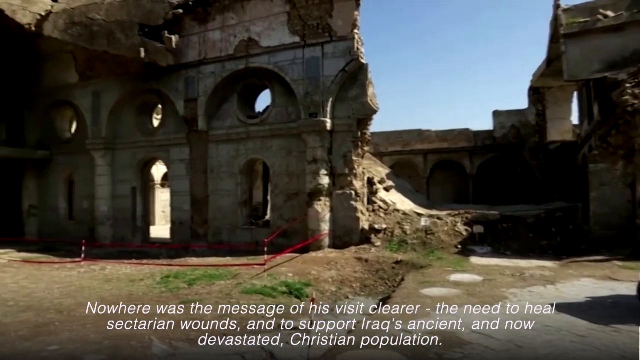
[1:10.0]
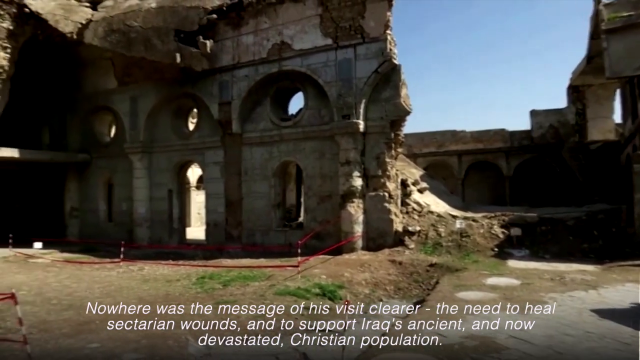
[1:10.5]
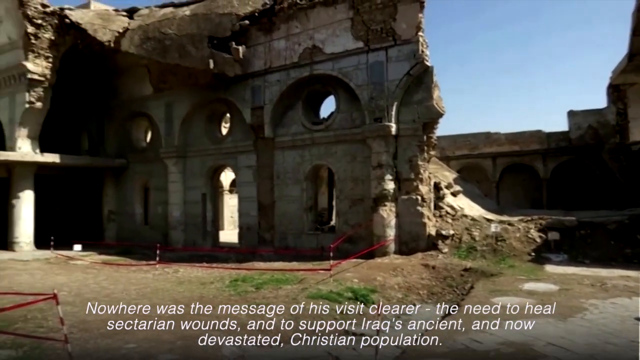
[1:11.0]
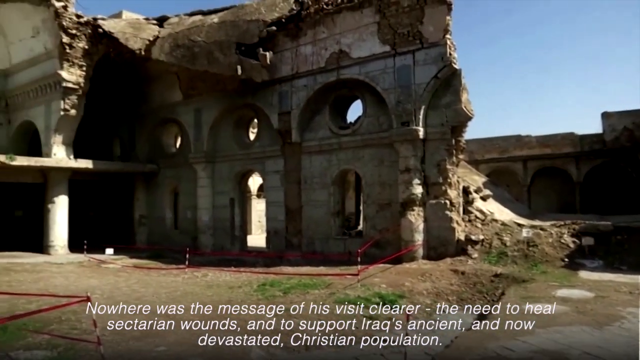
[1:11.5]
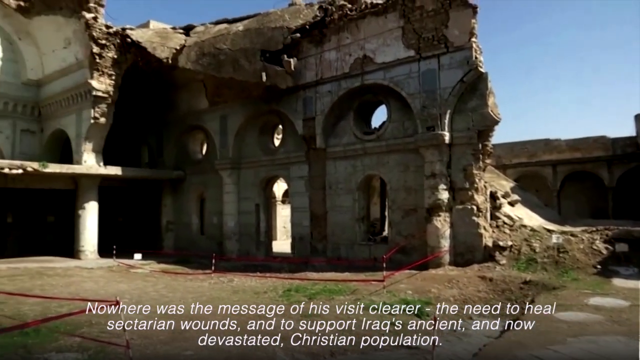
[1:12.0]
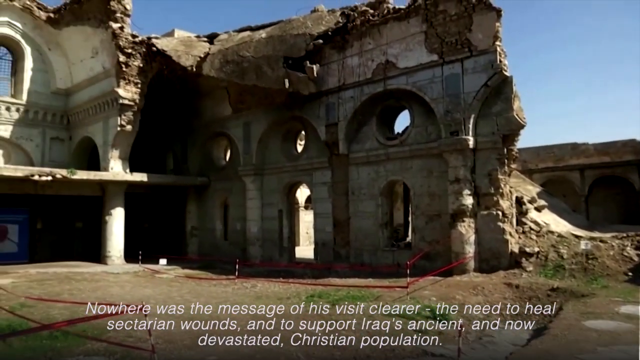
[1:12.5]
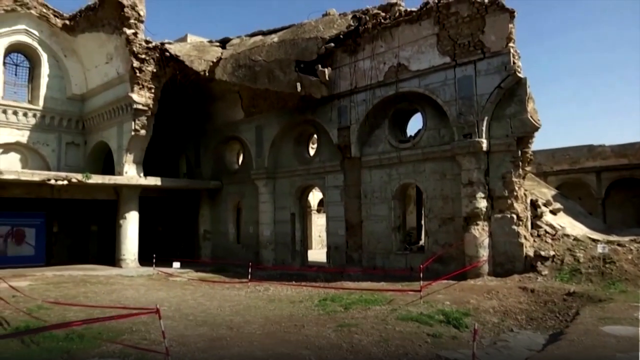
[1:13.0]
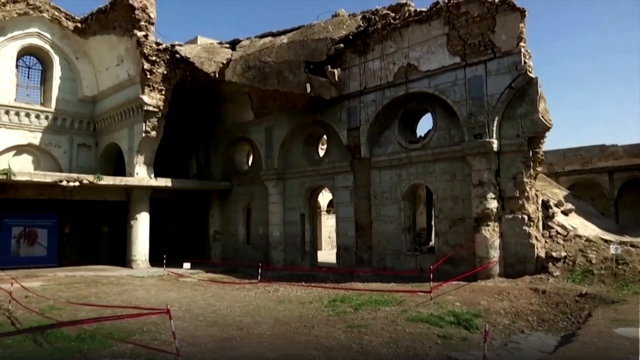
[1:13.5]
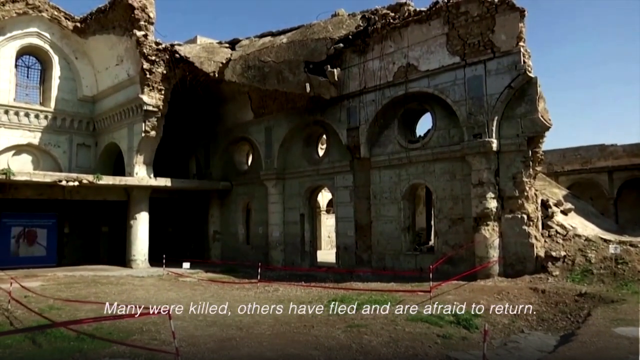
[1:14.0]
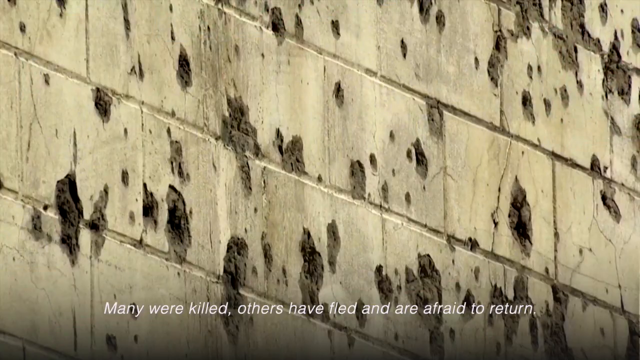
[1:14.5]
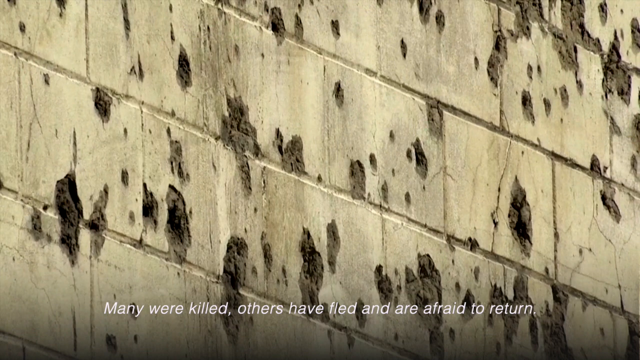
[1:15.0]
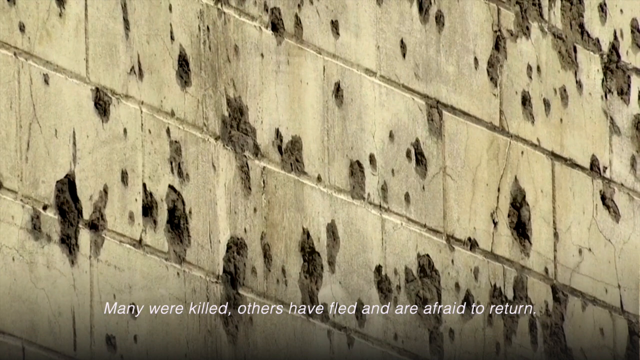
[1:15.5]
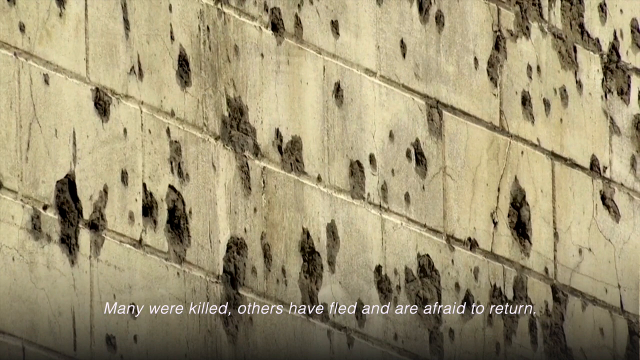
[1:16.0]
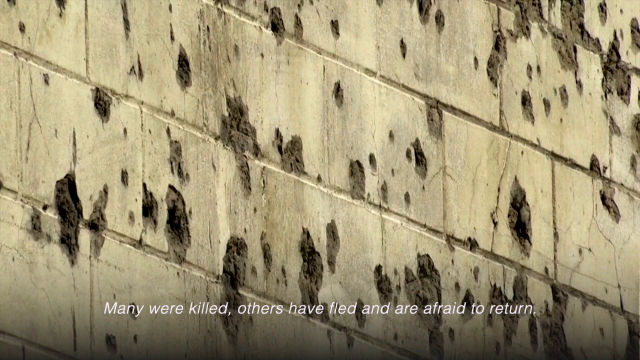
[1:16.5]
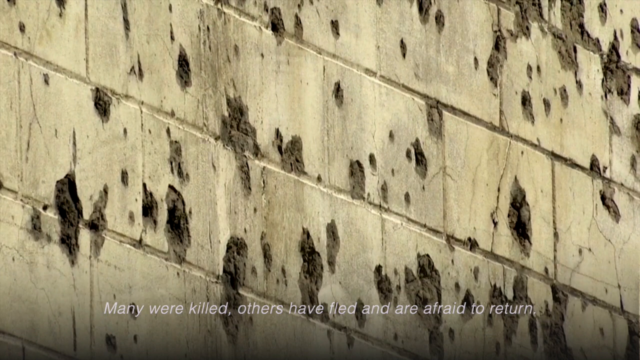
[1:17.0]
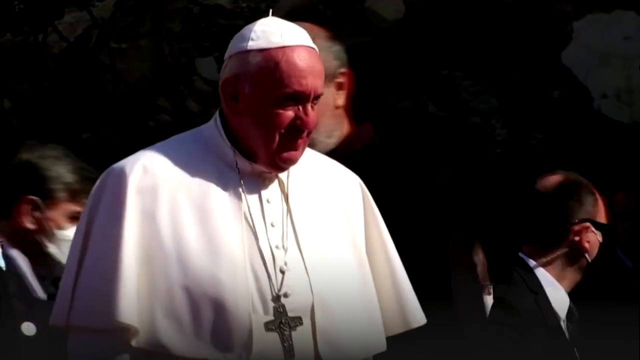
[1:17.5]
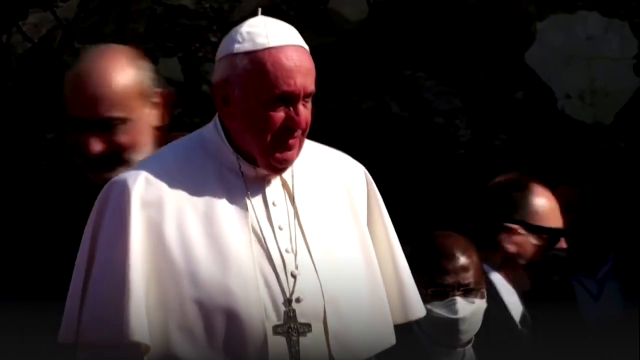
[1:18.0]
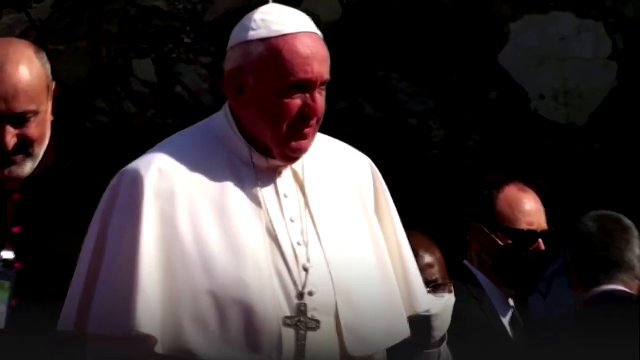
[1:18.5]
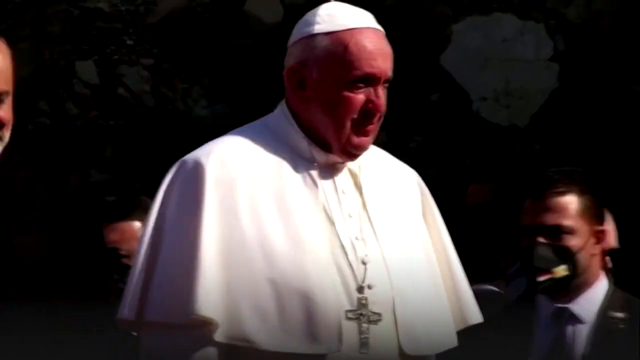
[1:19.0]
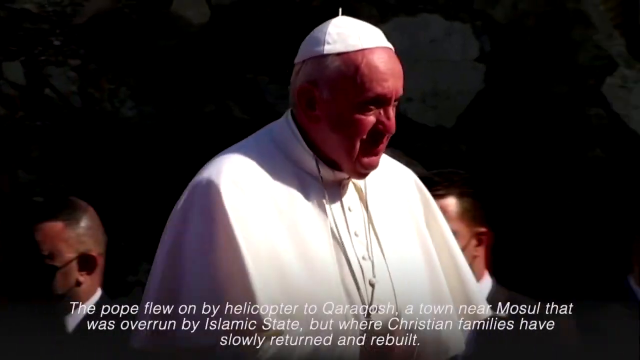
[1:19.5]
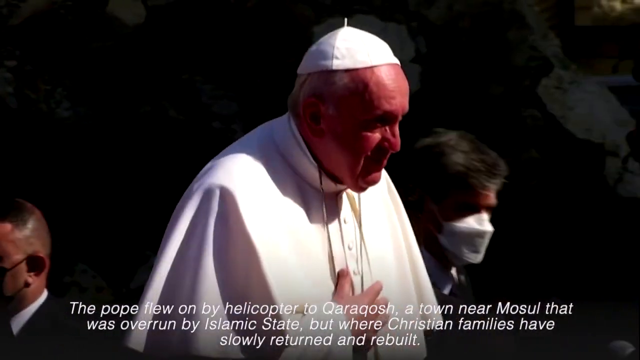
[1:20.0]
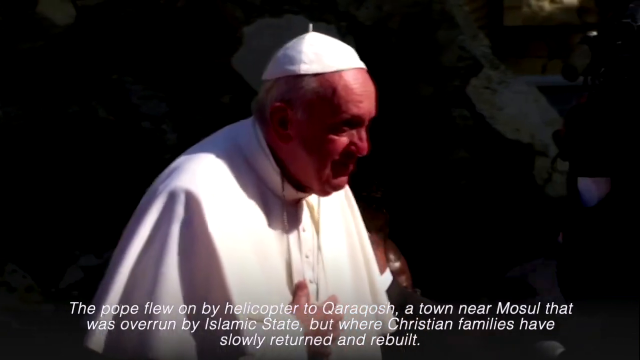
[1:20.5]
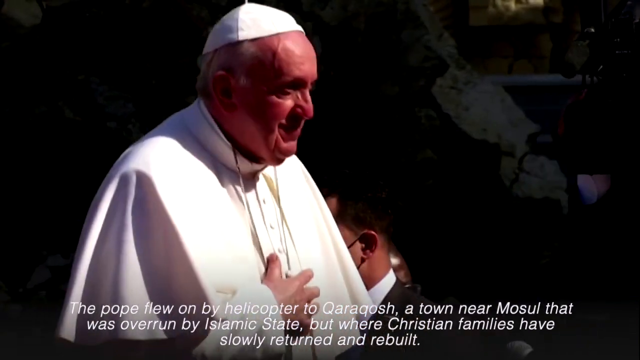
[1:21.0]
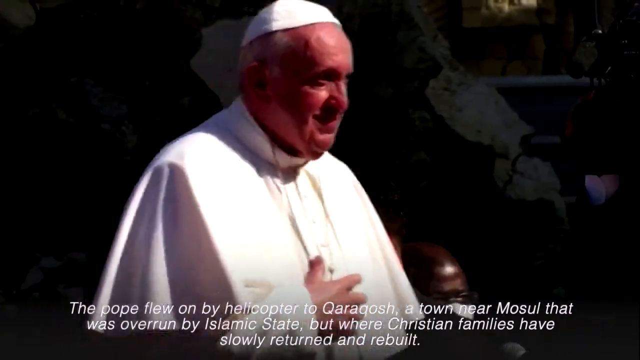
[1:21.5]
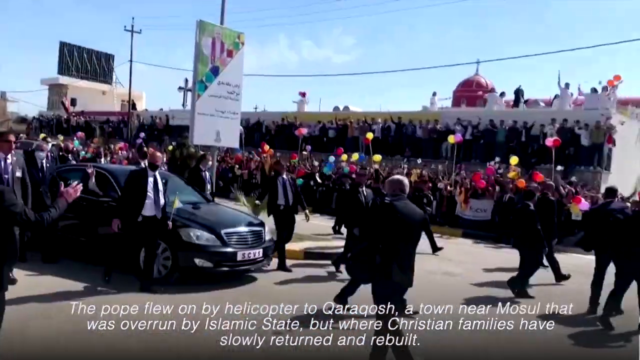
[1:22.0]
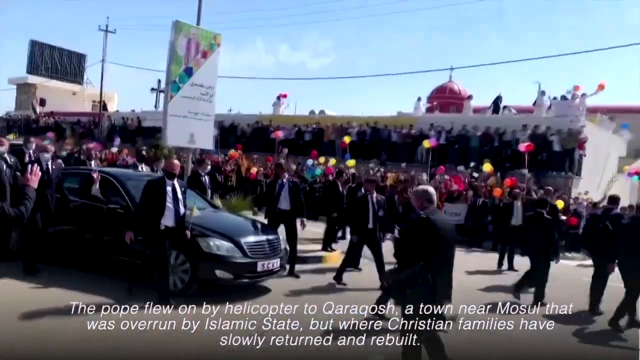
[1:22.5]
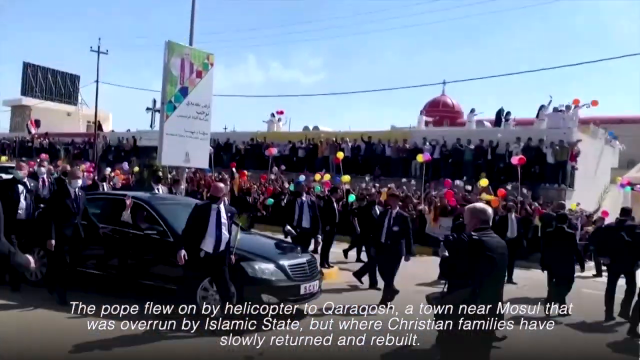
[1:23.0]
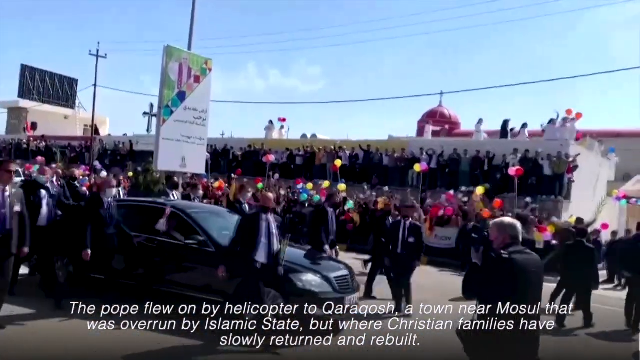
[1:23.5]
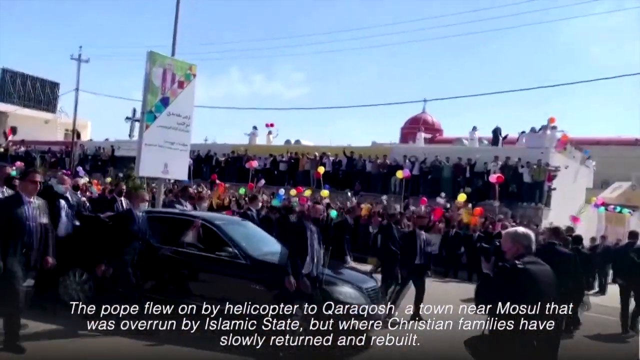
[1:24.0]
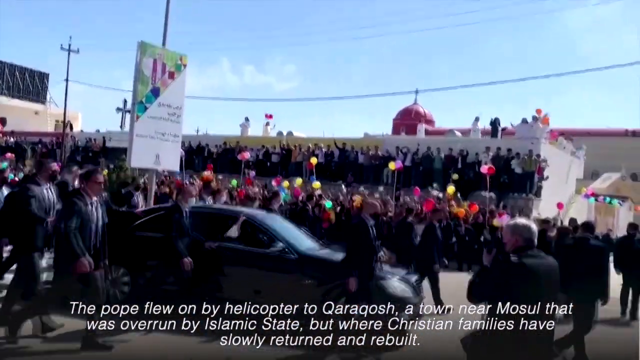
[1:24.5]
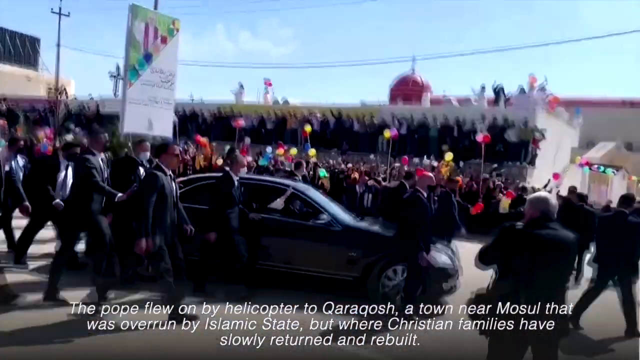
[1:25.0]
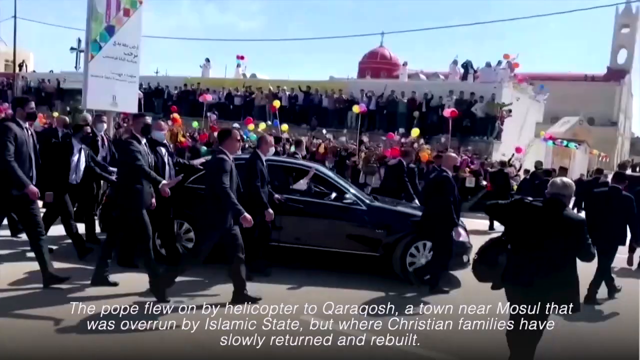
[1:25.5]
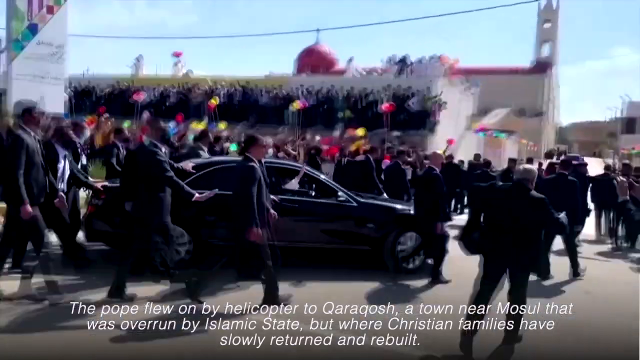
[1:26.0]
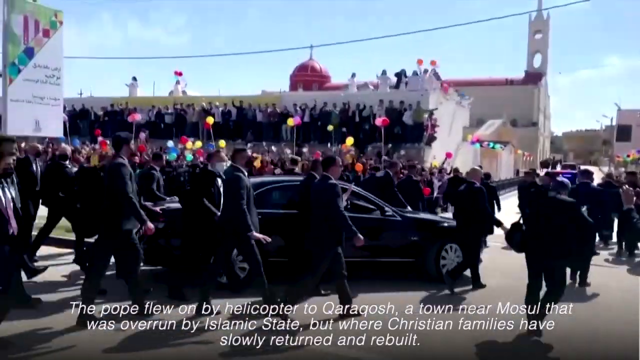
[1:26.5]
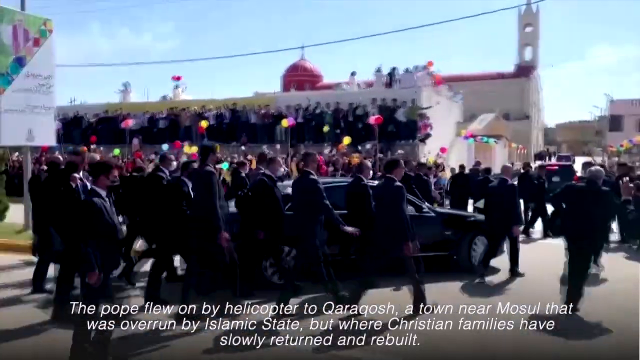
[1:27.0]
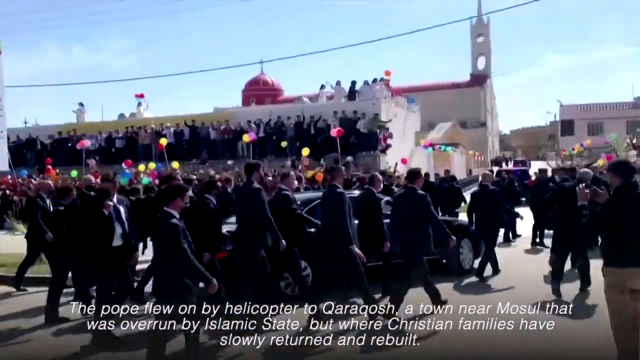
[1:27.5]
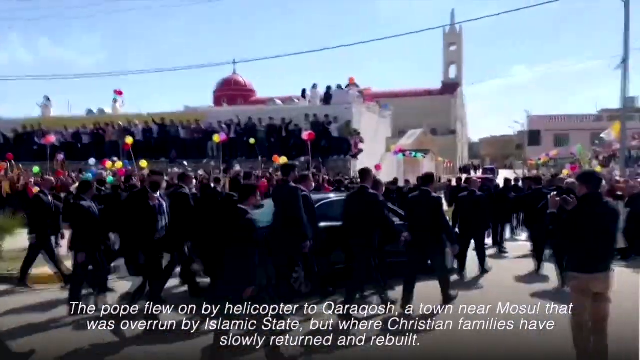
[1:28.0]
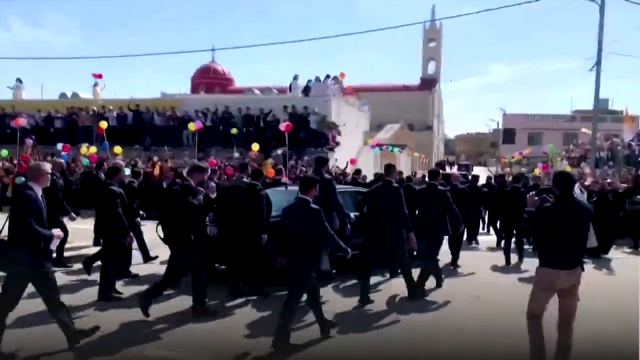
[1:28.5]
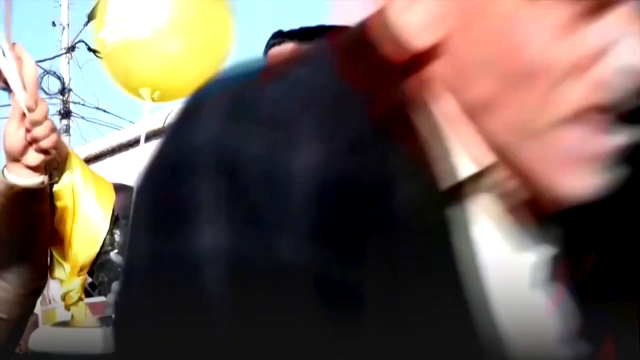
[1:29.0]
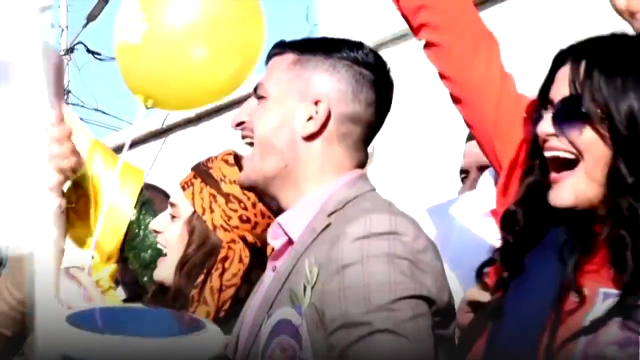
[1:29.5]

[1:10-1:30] The damage to a building in the area is shown; it looks like an old stone building. A close-up of a wall follows, and it looks like it has had bullets shot into it. The buildings are mostly made of light-colored stone. Pope Francis is then seen looking around, back in the black car. A huge team, probably security members, in black suits walks beside the car as it moves very slowly down the road; the security team apparently numbers at least 20 people. A large audience around them is still cheering him on and waving flags of various kinds. A brief close-up shows one member of the crowd who looks happy to be seeing the Pope.